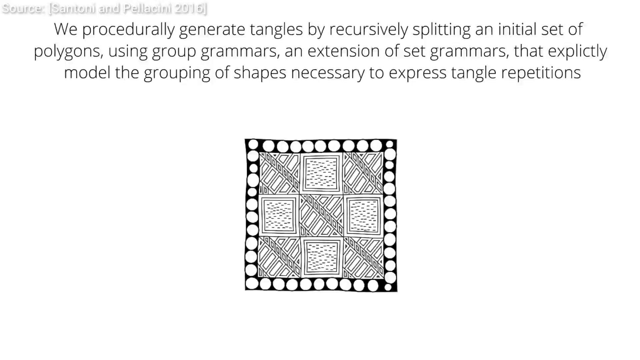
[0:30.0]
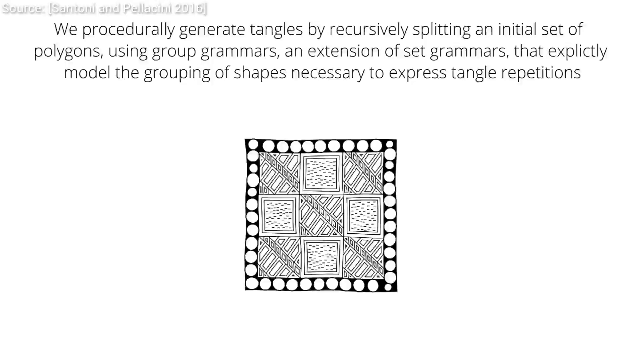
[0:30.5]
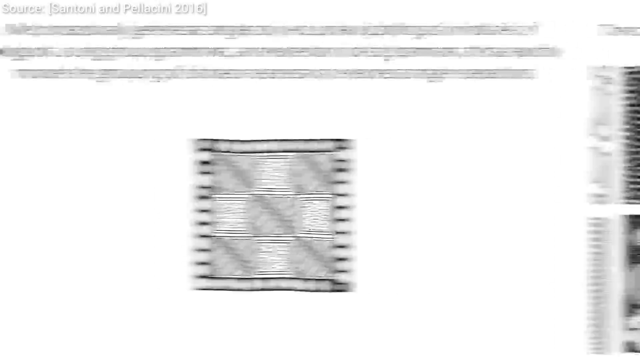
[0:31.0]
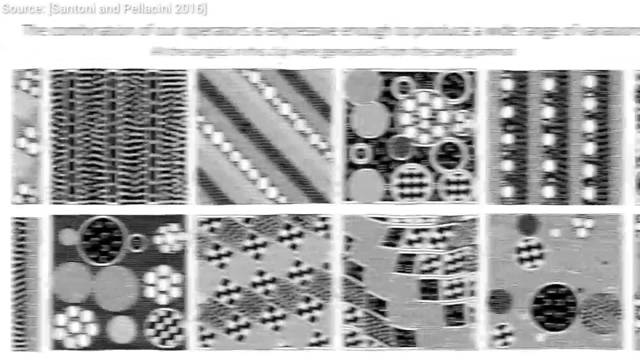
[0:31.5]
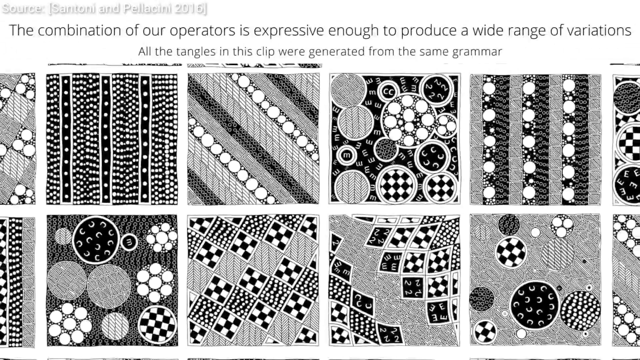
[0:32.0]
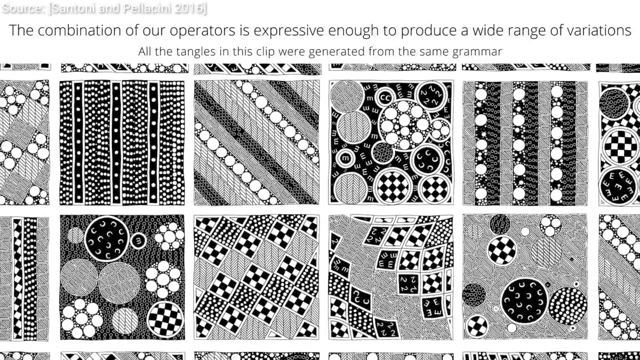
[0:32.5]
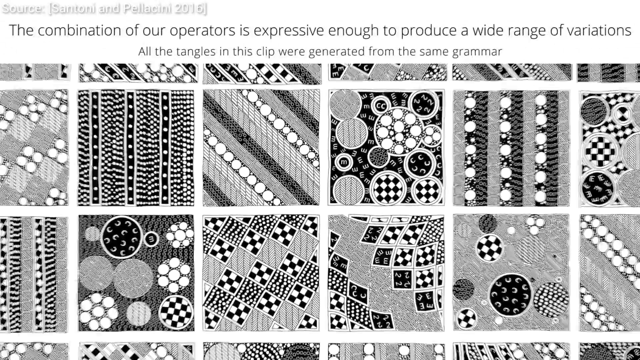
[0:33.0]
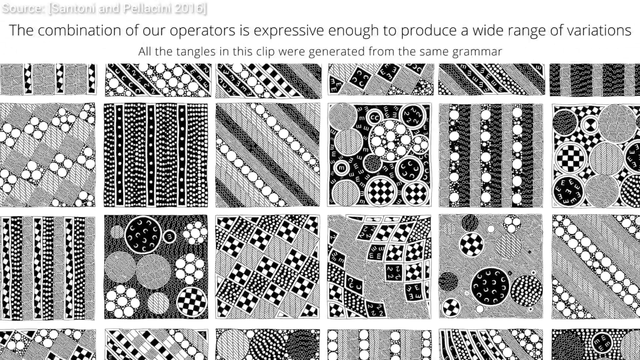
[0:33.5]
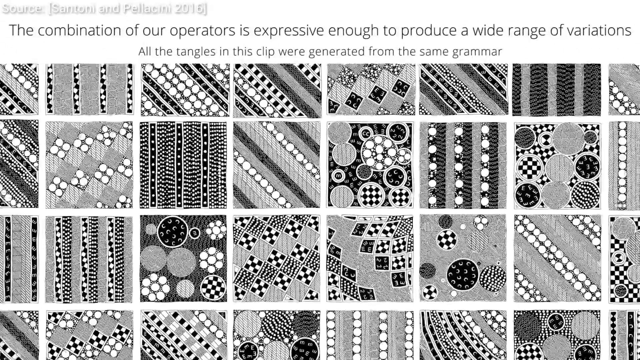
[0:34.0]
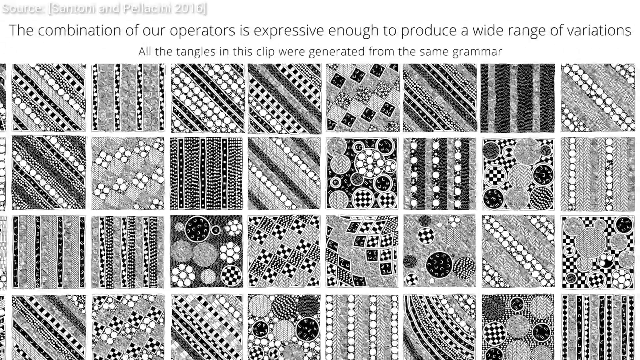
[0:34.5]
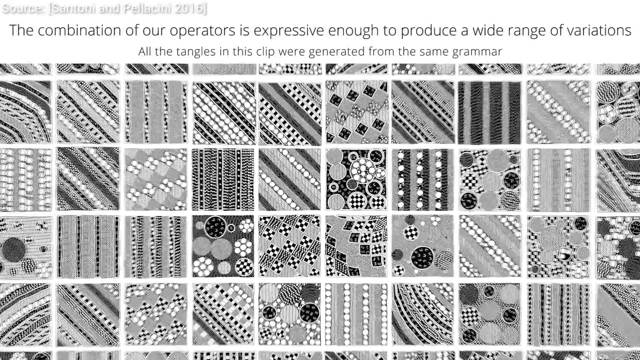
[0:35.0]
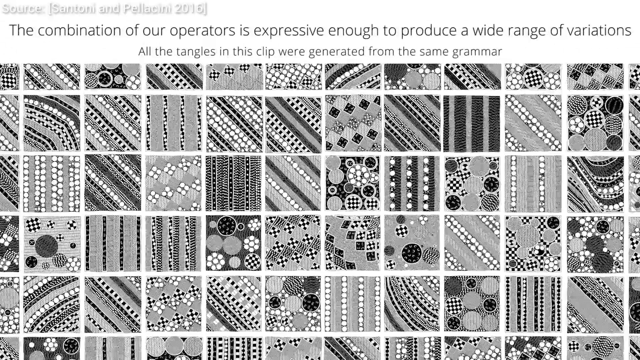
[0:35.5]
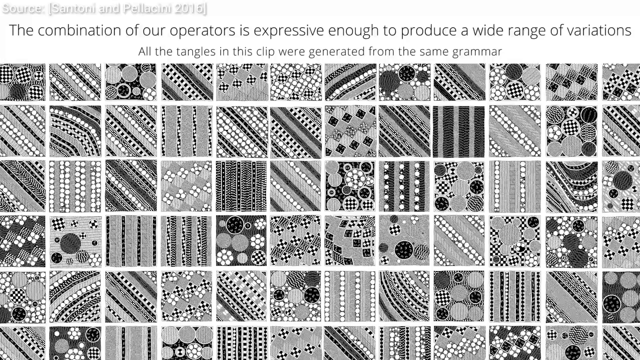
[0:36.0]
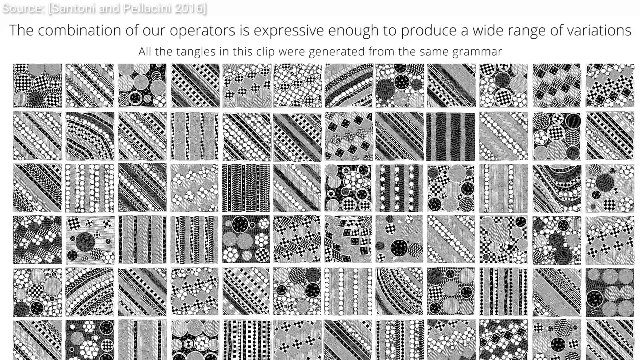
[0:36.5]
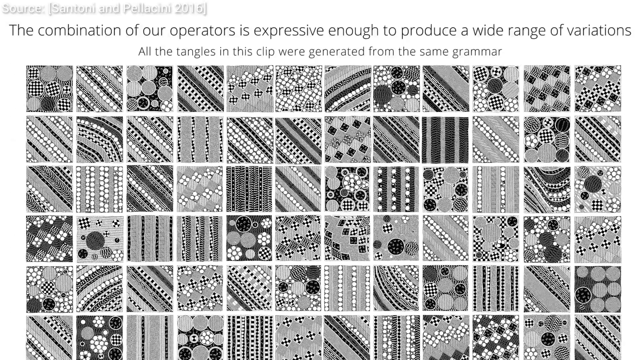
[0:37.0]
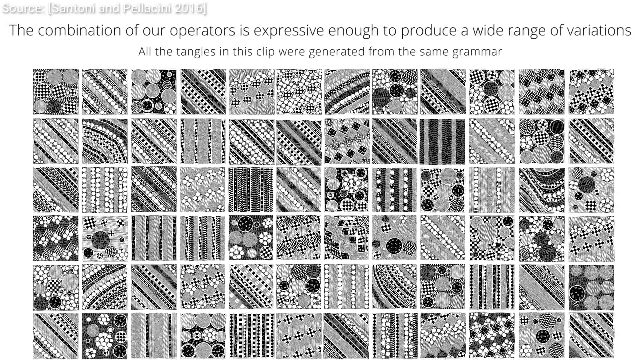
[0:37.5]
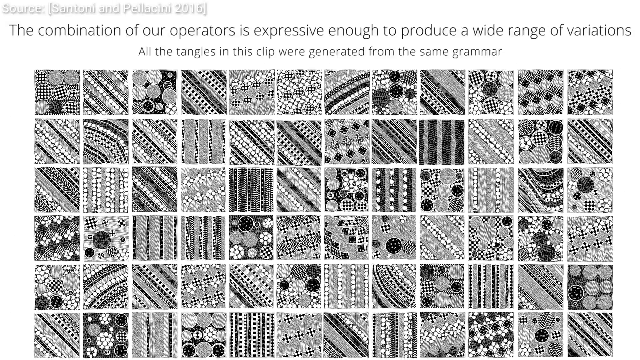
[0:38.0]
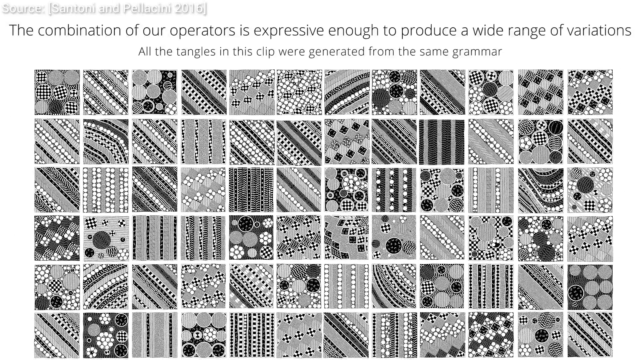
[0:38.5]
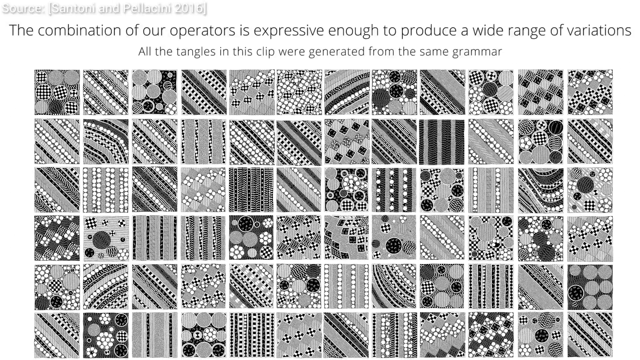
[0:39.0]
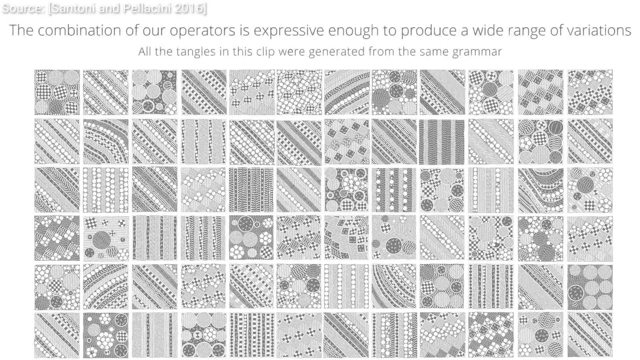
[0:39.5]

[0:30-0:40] The square in the middle continues, with multiple design patterns within it. The scene then changes to multiple squares, each with a different black-and-white design pattern, and text on top reading "the combination of our operators is expressive enough to produce a wide range of variations. All the tangles in this clip were generated from the same grammar." The view zooms out, revealing more squares with very unique abstract patterns of different shapes; within the squares are other squares, circles, and many other shapes. All the images are black and white. The view keeps zooming out to show more squares, and then the scene changes.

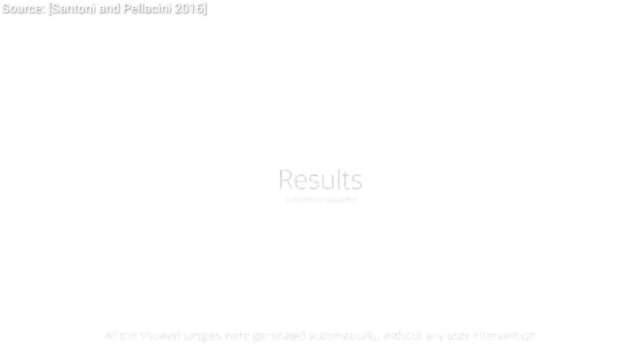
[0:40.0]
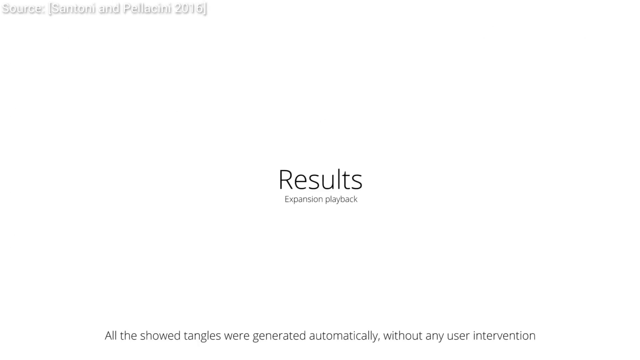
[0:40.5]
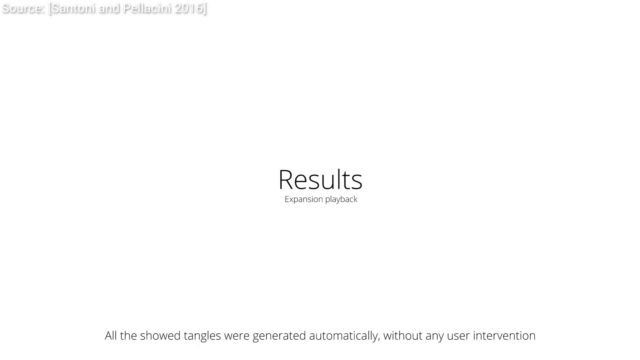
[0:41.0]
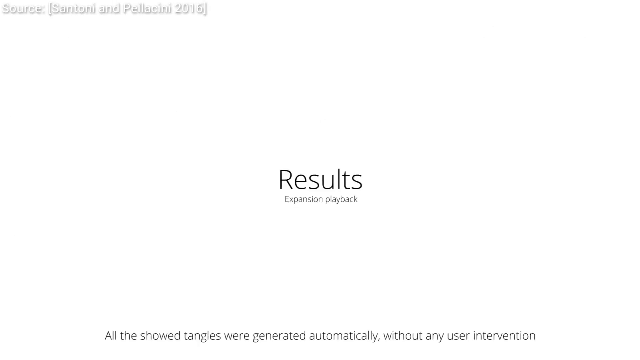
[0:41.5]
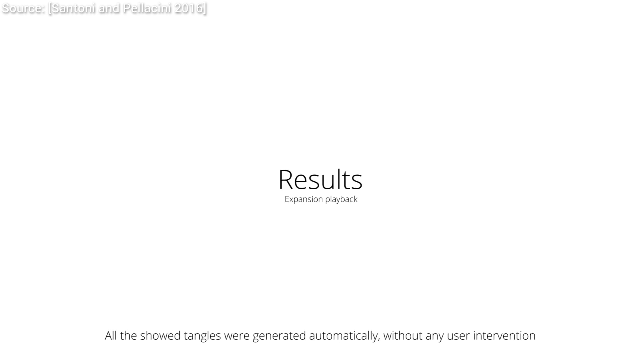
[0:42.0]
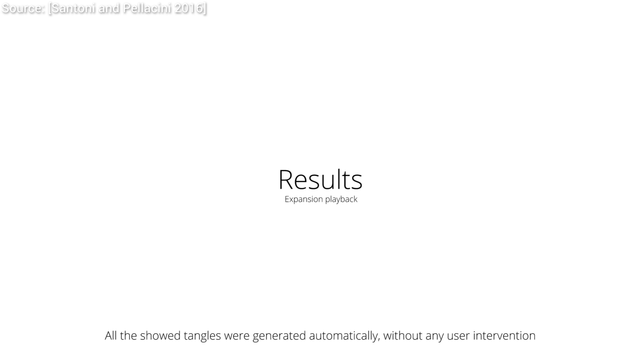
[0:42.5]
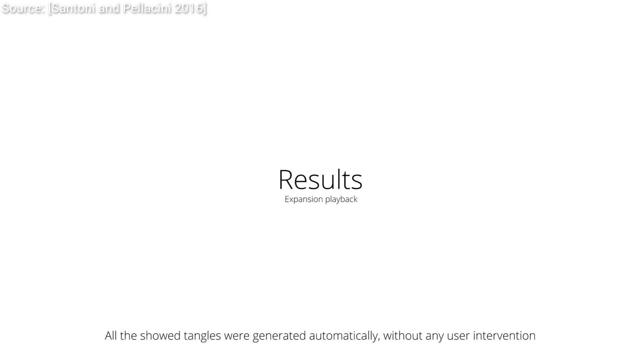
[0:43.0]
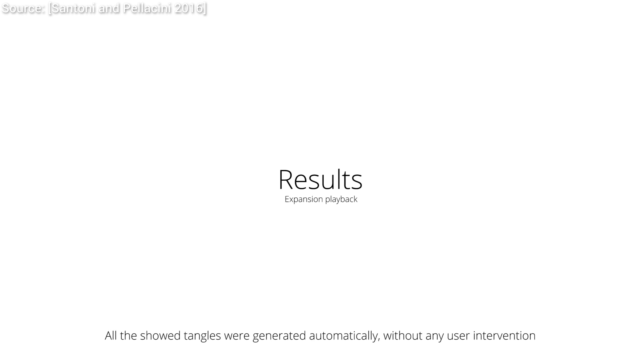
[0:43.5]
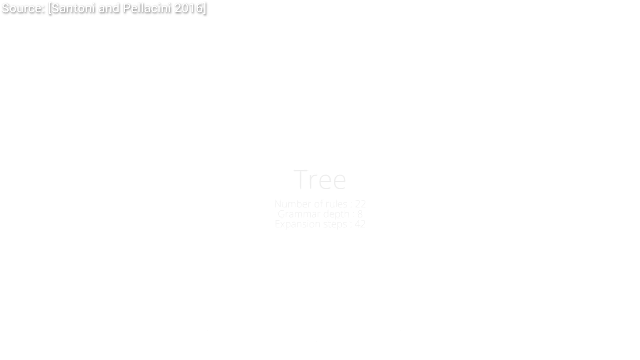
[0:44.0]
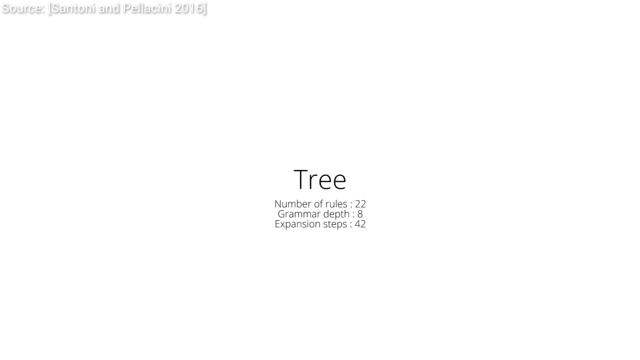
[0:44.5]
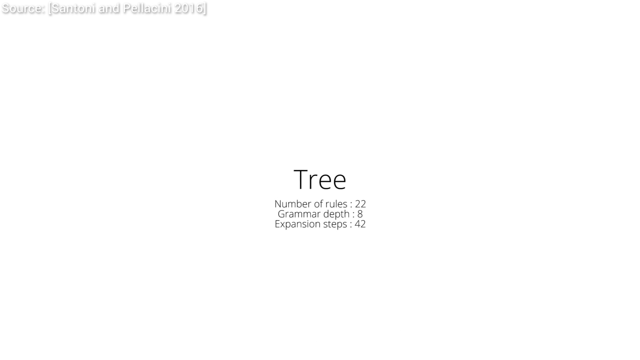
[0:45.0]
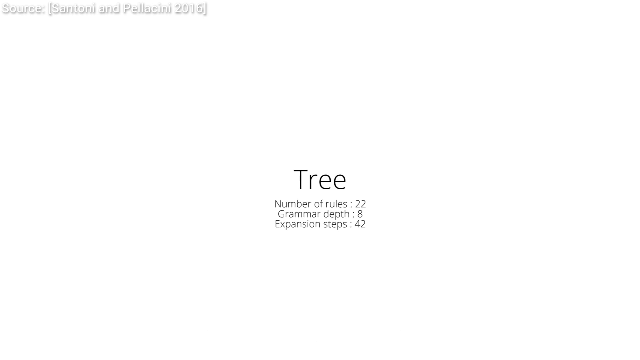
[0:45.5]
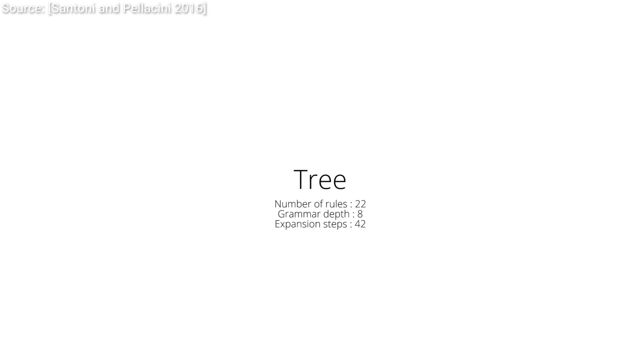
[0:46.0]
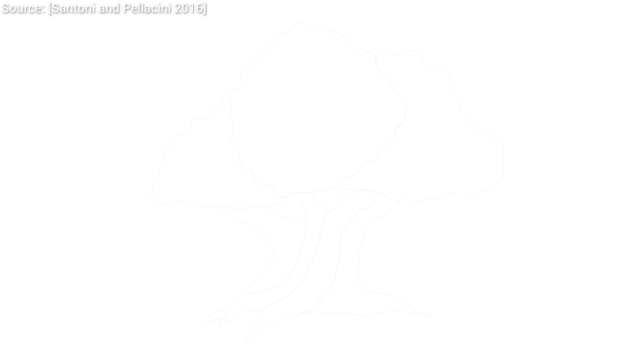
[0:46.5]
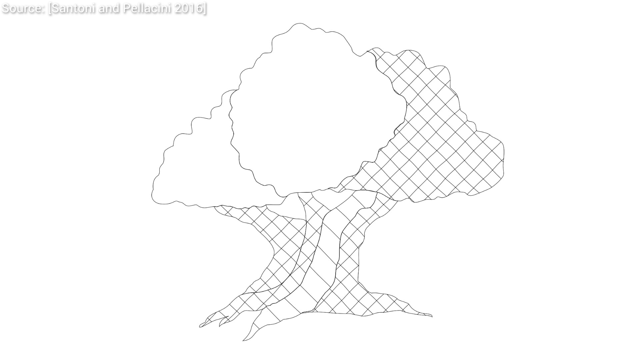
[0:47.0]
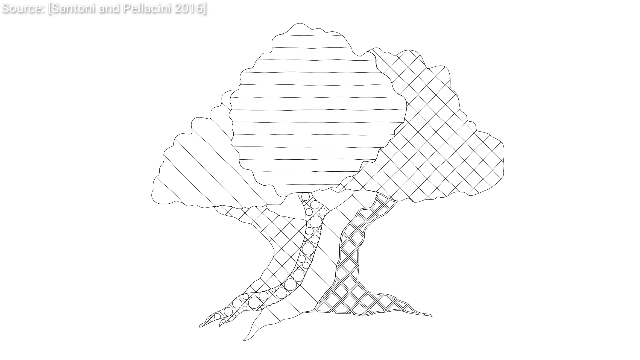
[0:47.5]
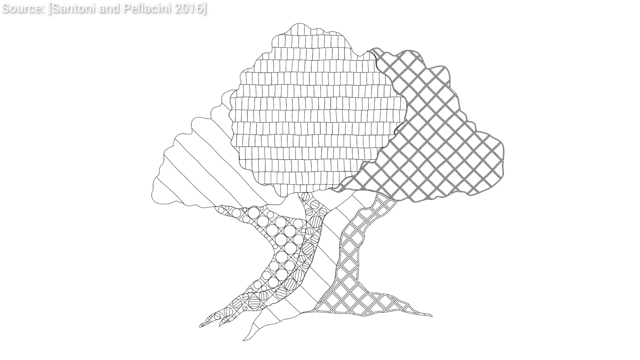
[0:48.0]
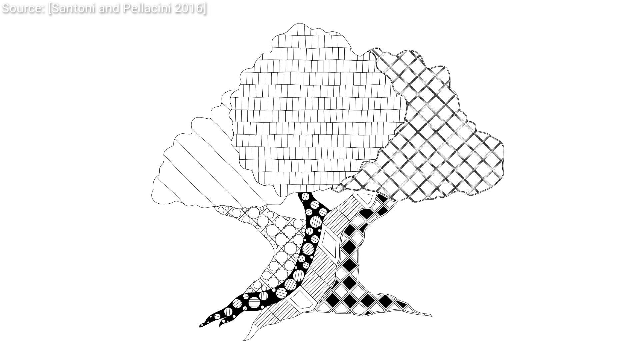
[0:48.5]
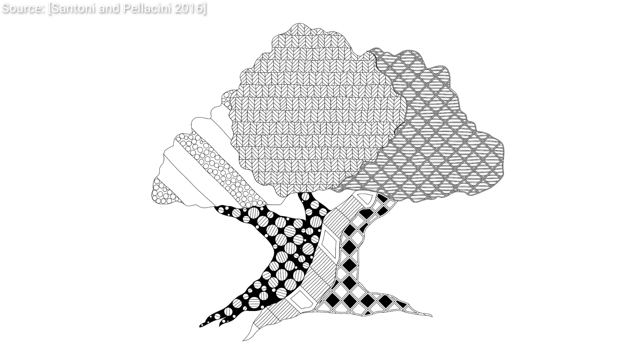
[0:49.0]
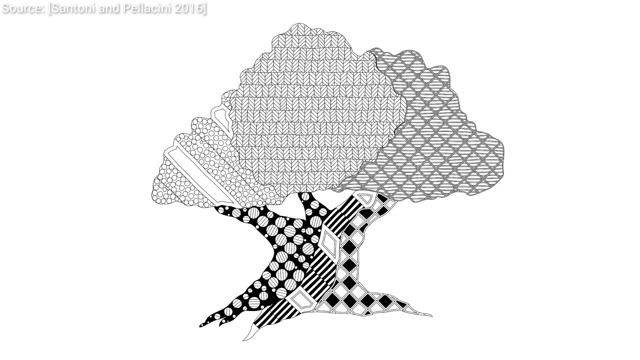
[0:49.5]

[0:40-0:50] The screen turns all white, and the word "Results" appears in the middle, with the text "Expansion Pack" underneath. The text then changes to the word "tree" in the middle, with "Number of Rules 22, Grammar Depth 8, Expansion Steps 42" beneath it. The text and numbers disappear, and an image of a tree appears, with many black-and-white lines throughout it. More design patterns of circles, squares and rectangles fill the tree until the whole tree is filled with these patterns of shapes. The tree is all black and white.